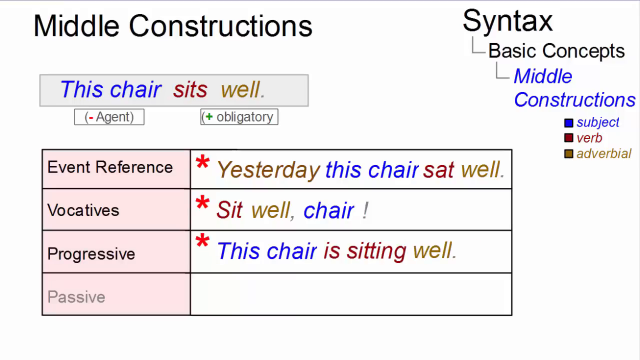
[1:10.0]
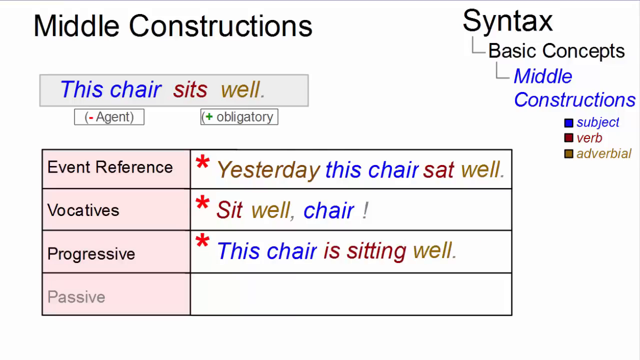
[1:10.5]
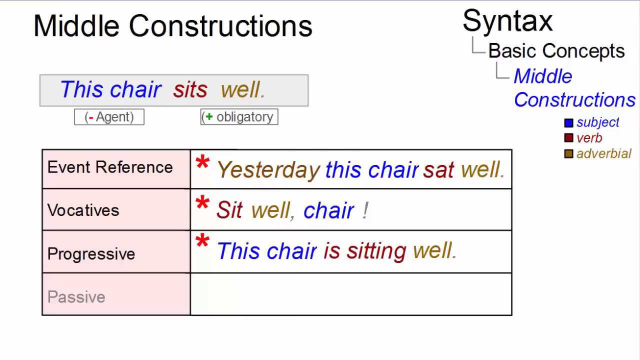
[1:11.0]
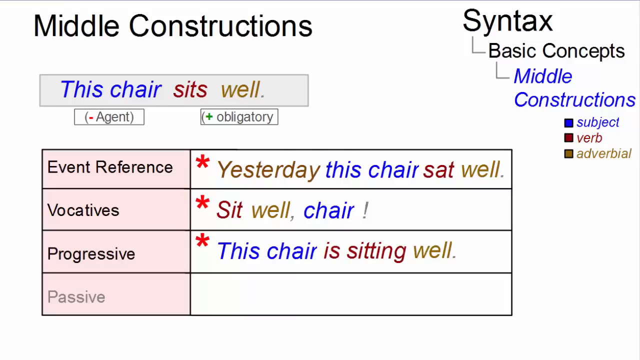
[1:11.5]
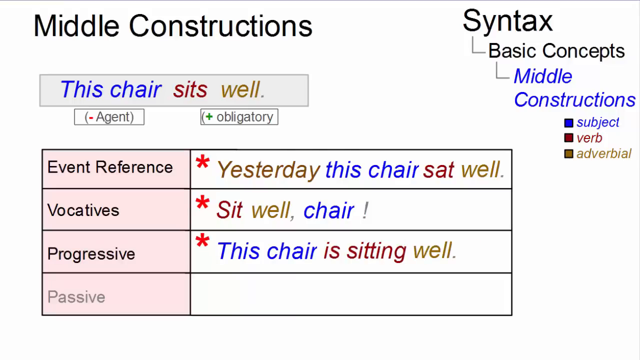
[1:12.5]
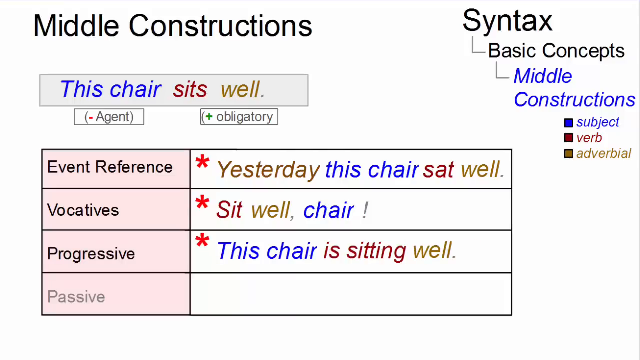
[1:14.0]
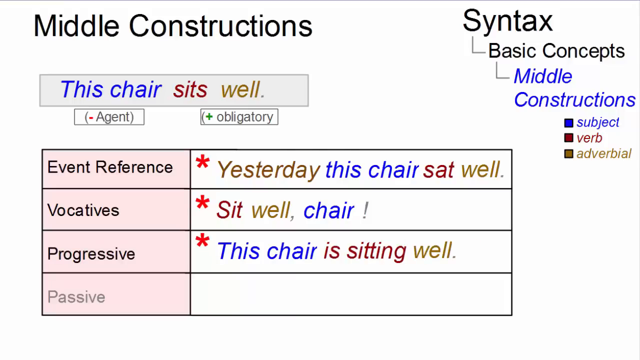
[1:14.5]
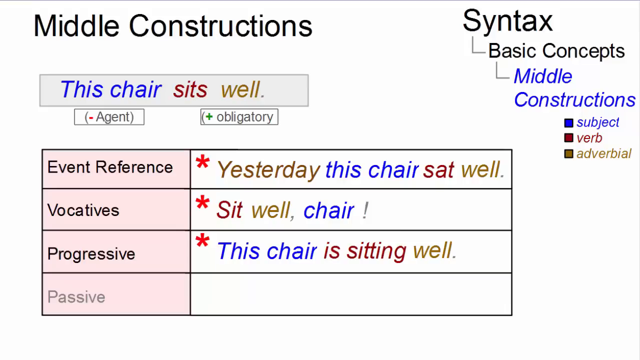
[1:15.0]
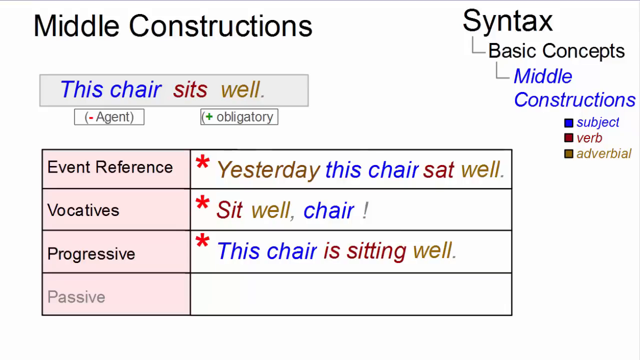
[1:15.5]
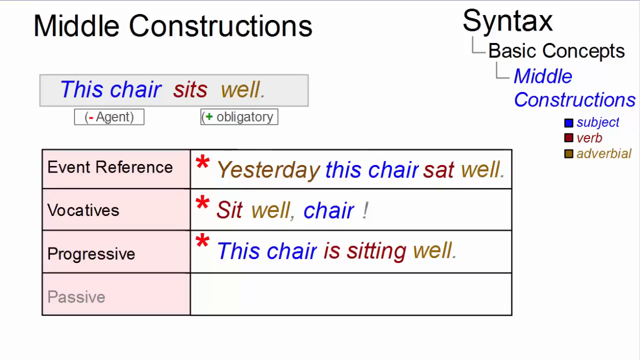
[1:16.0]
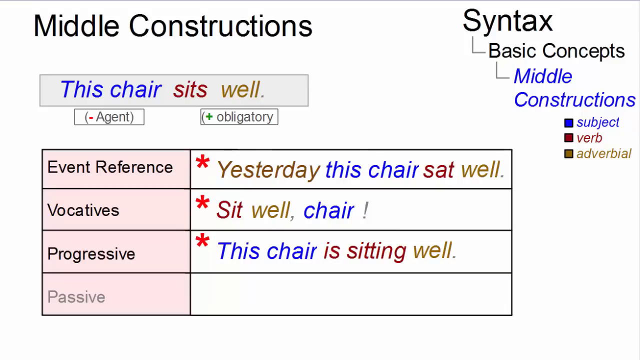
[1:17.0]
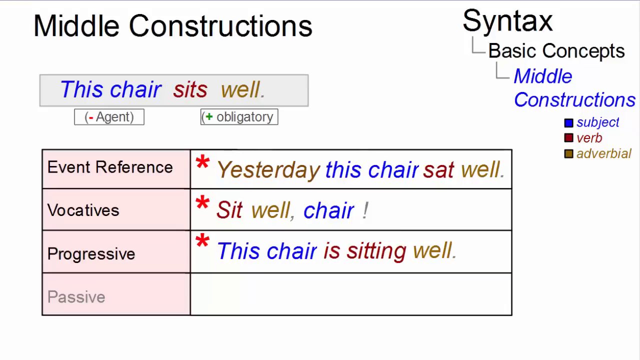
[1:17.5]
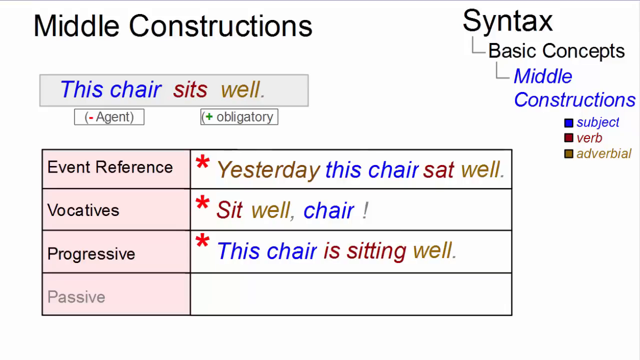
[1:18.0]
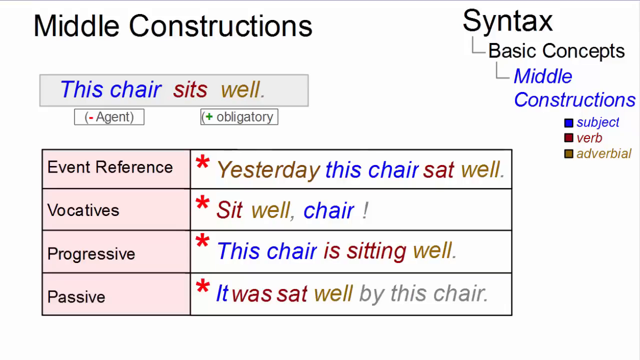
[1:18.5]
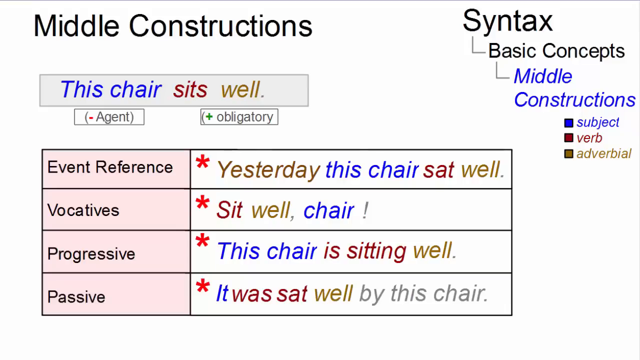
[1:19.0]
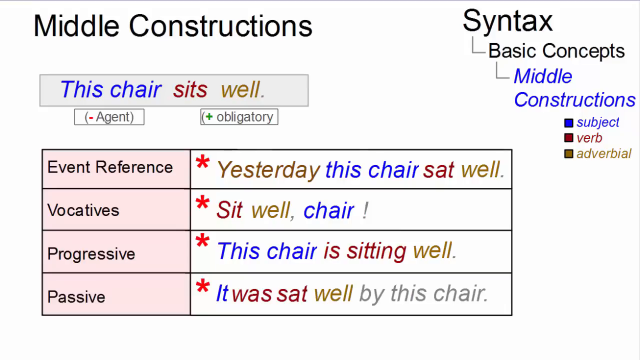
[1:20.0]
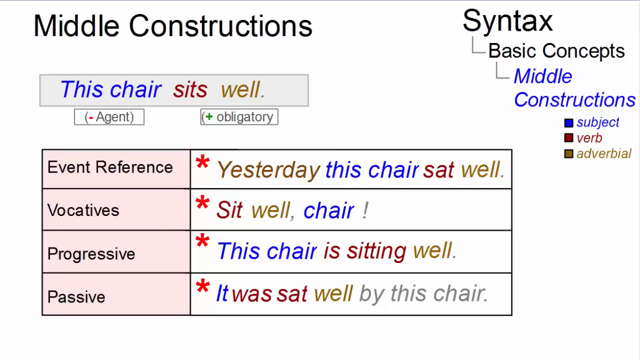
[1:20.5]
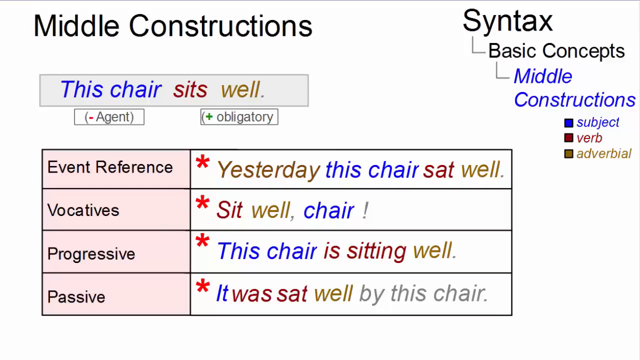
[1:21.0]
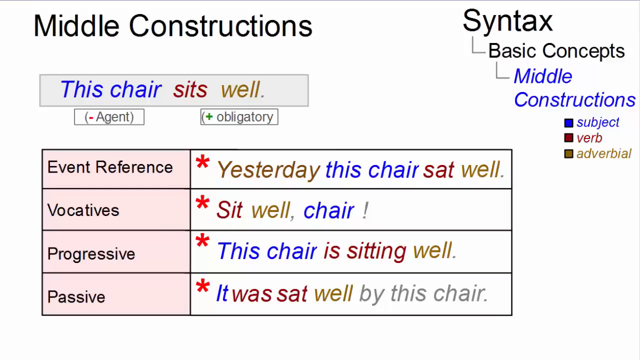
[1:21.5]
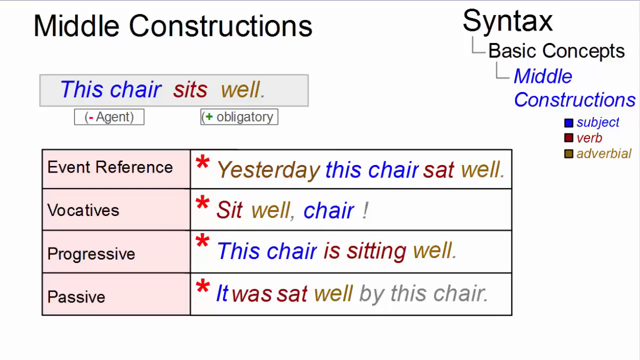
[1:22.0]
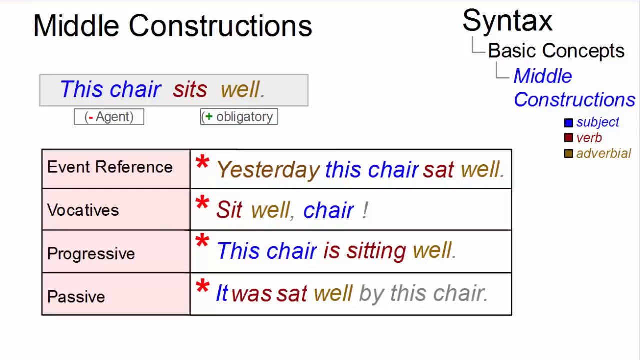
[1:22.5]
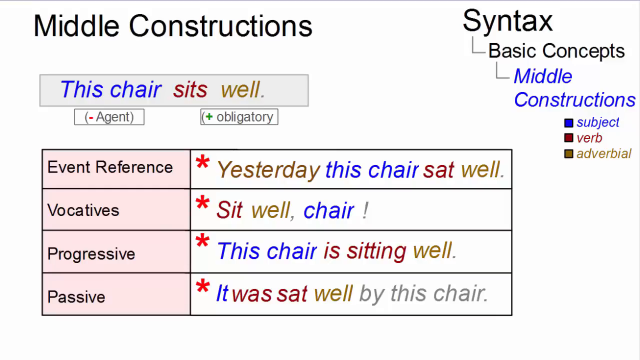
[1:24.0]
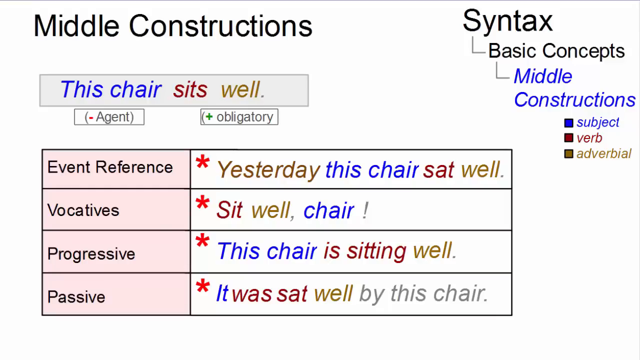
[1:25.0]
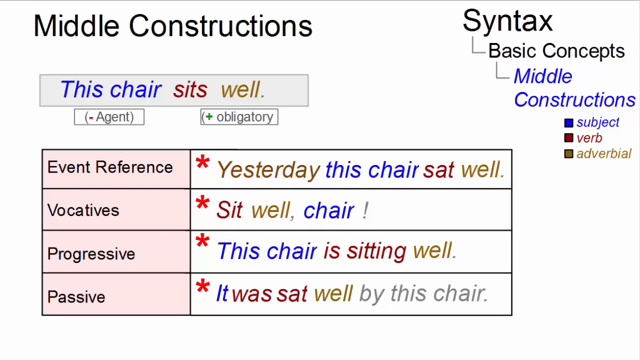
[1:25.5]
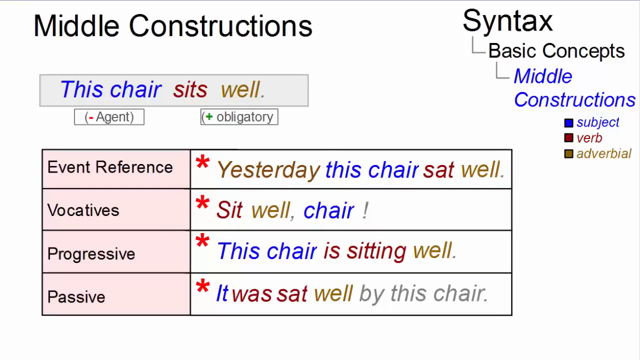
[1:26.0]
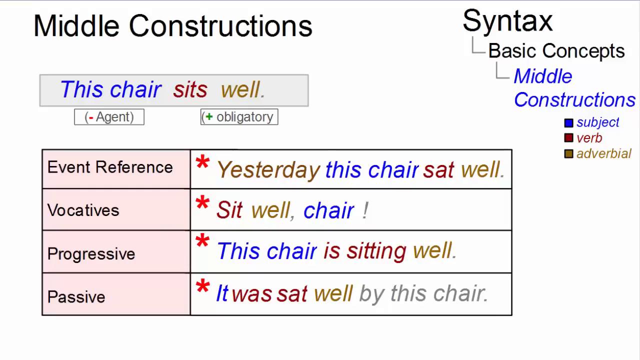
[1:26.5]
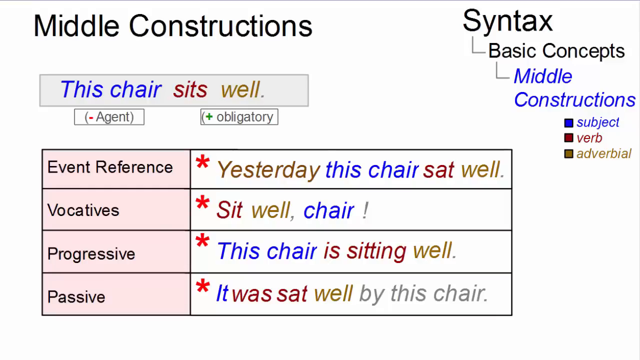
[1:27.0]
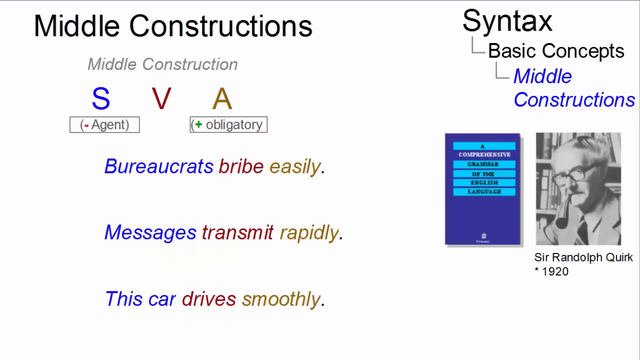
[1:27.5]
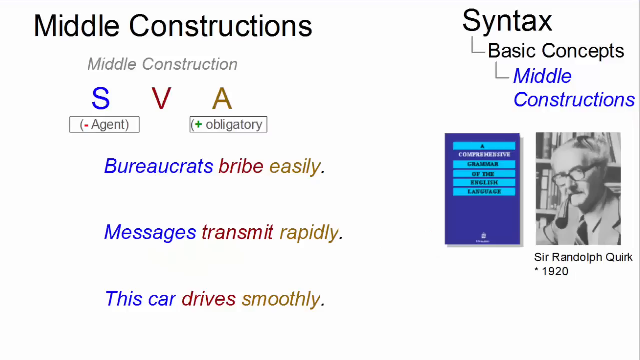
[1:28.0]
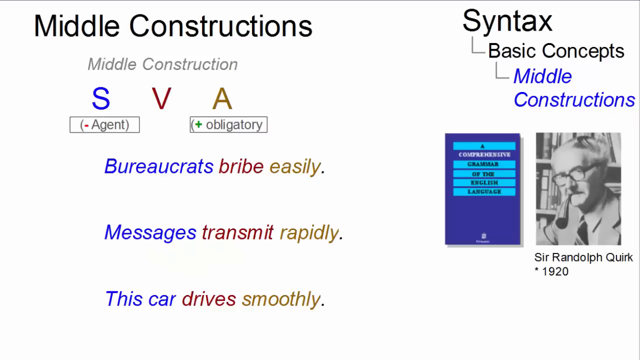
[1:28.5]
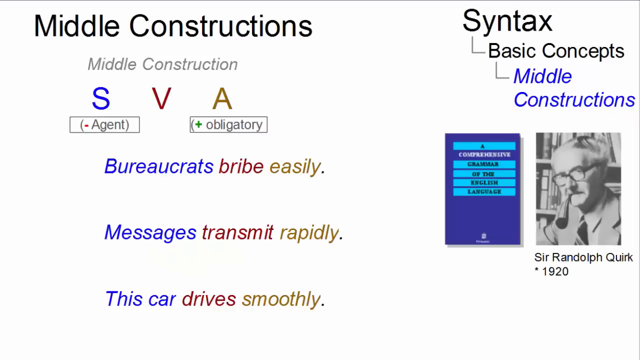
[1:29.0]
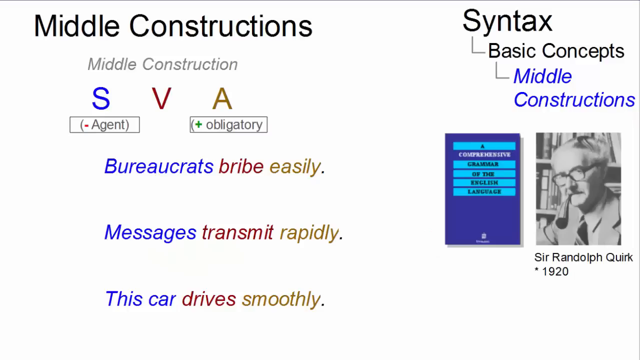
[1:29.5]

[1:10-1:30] The middle constructions page shows the sentence "this chair sits well", with minus for agent and plus for obligatory. In the table, the event reference is "yesterday this chair sat well", the vocative is "a sit well chair", the progressive is "this chair is sitting well" and the passive is "it was sat well by this chair". Subjects are in blue, the verb is in red and the adverbial is in orange, and the four forms are in the table. The video then moves to another middle constructions page showing SVA, where S stands for subjects in blue, with example sentences including "messages transmit rapidly". On the right is a picture of Sir Randolph Quirk.